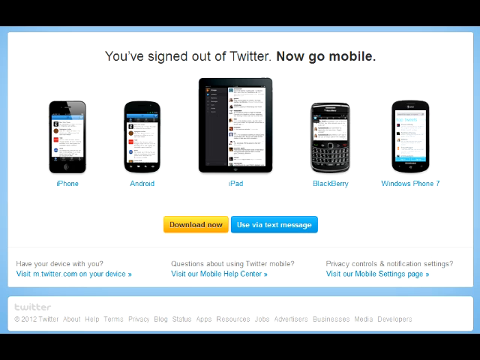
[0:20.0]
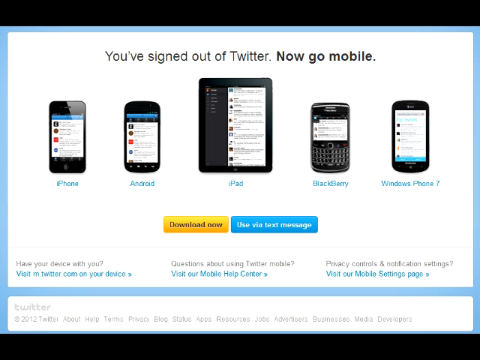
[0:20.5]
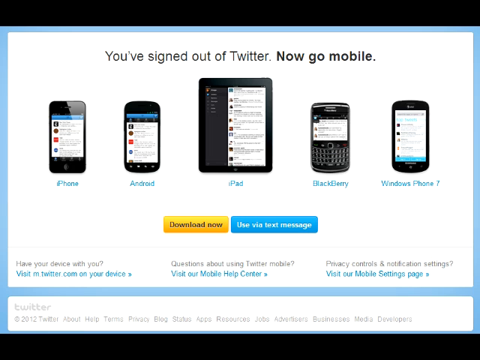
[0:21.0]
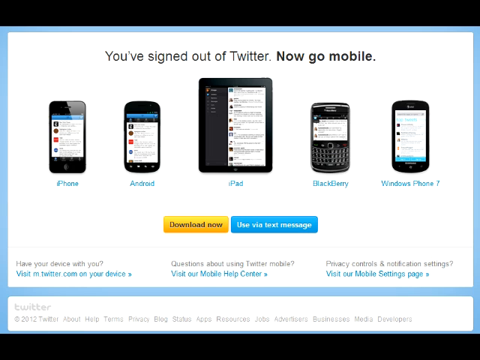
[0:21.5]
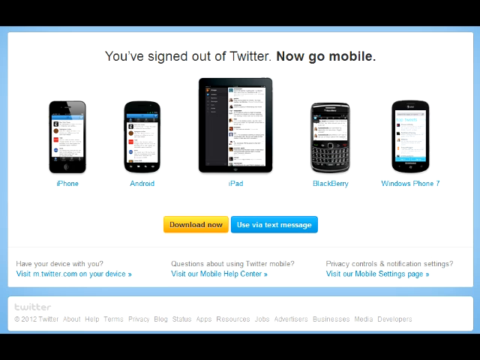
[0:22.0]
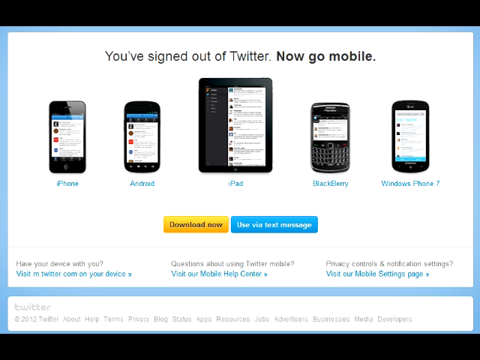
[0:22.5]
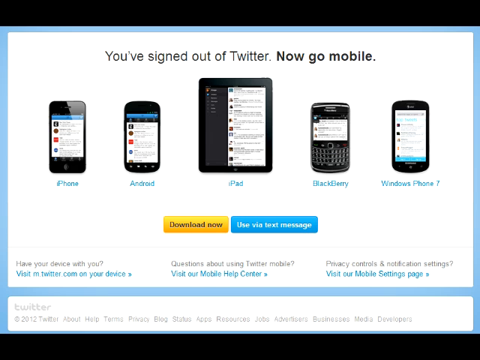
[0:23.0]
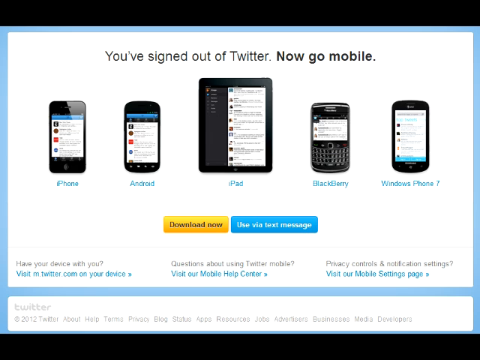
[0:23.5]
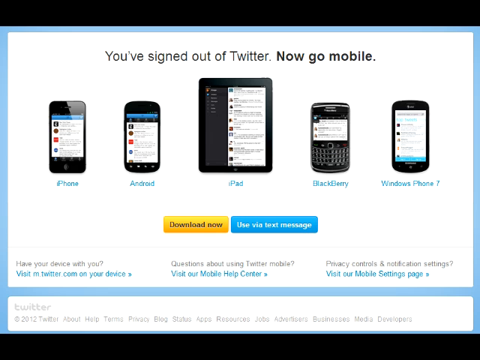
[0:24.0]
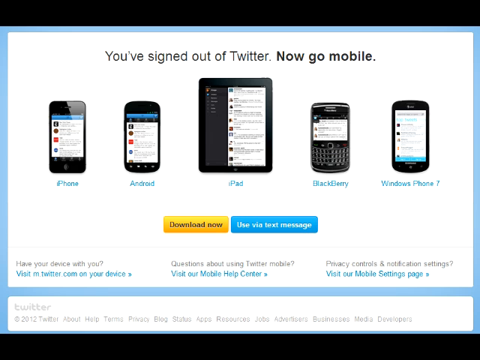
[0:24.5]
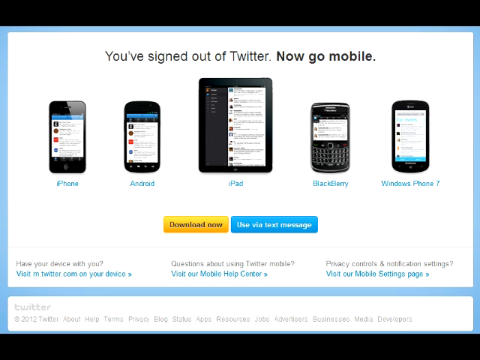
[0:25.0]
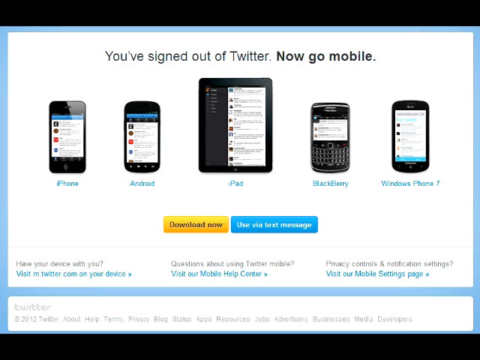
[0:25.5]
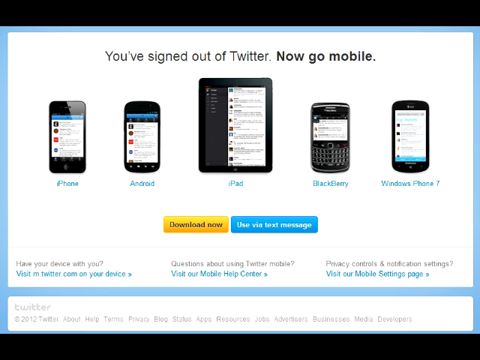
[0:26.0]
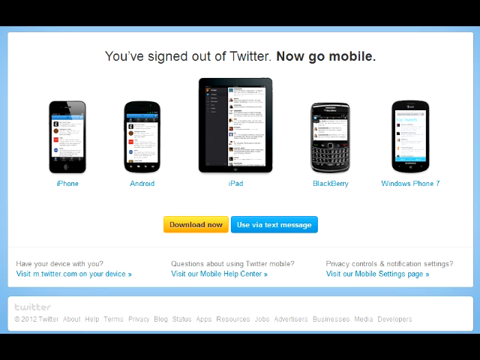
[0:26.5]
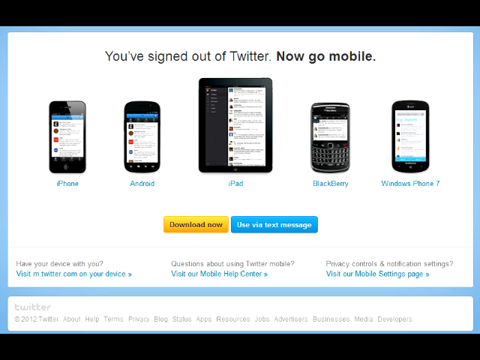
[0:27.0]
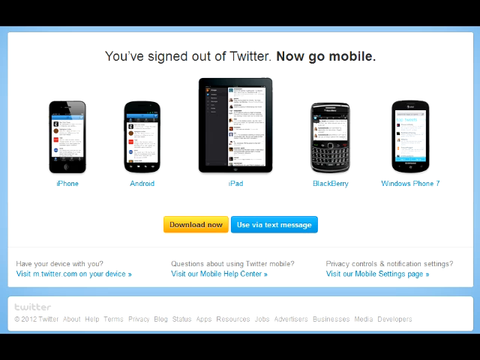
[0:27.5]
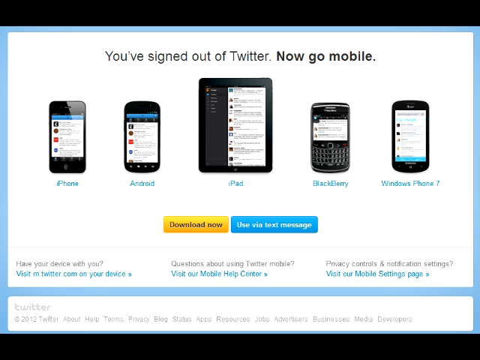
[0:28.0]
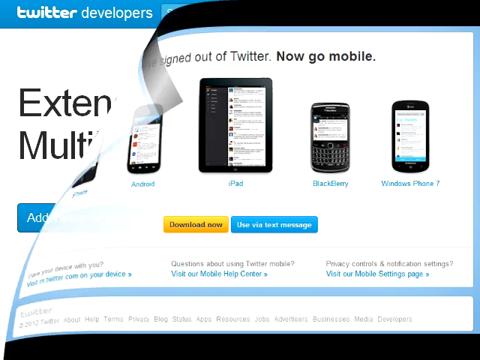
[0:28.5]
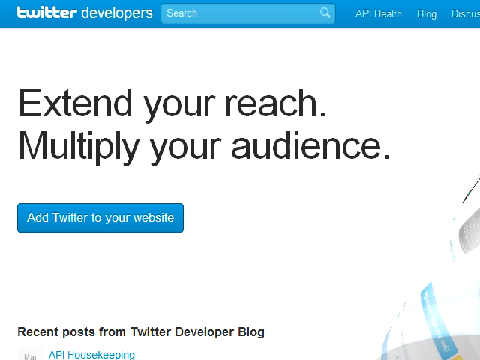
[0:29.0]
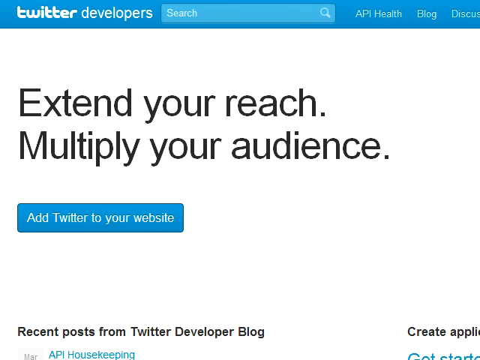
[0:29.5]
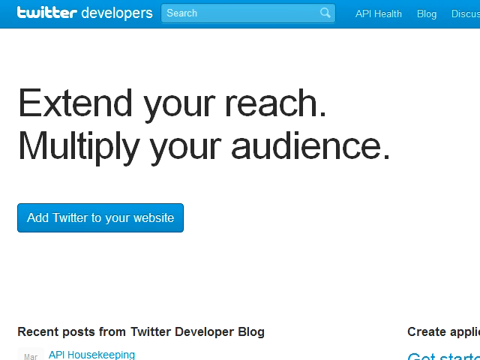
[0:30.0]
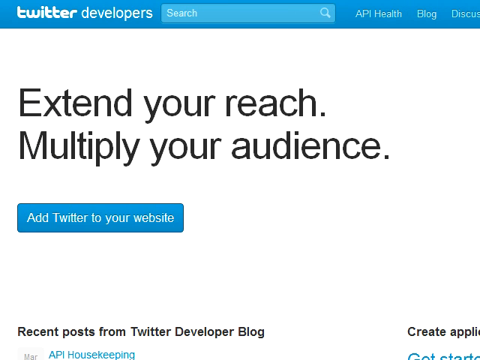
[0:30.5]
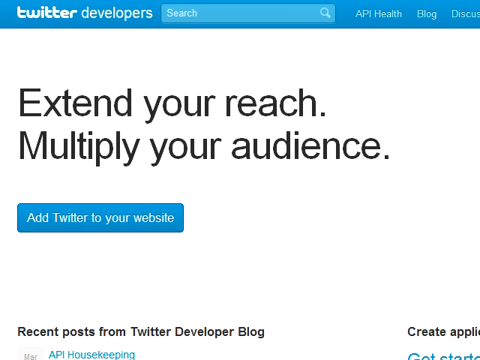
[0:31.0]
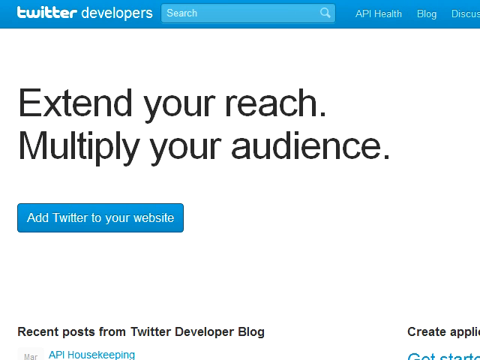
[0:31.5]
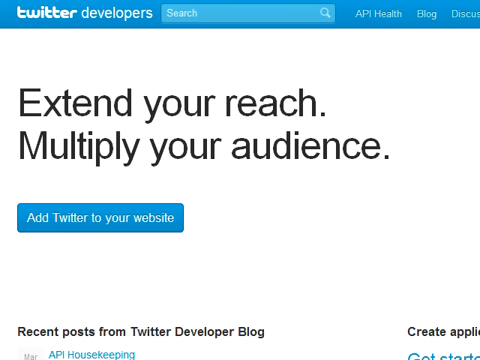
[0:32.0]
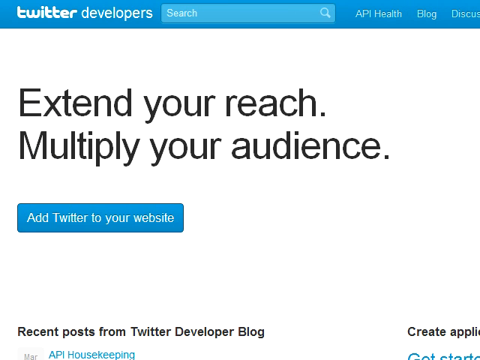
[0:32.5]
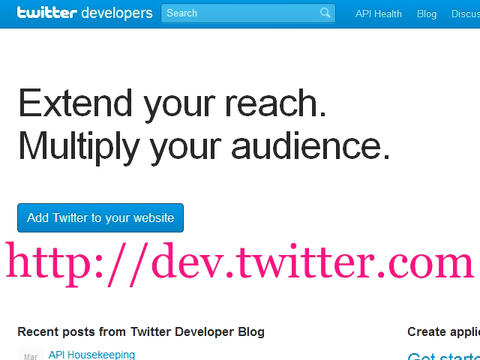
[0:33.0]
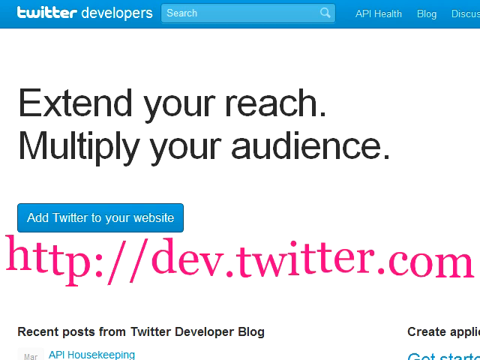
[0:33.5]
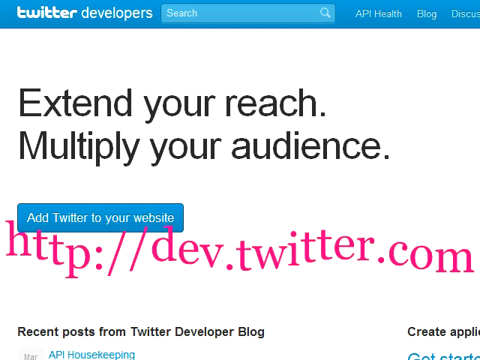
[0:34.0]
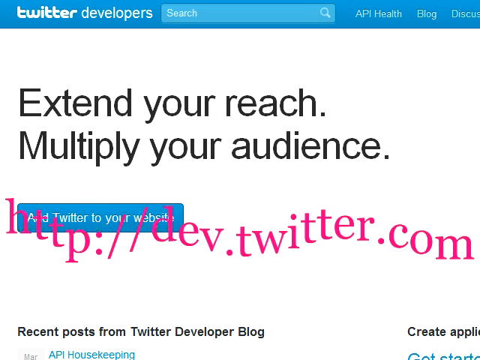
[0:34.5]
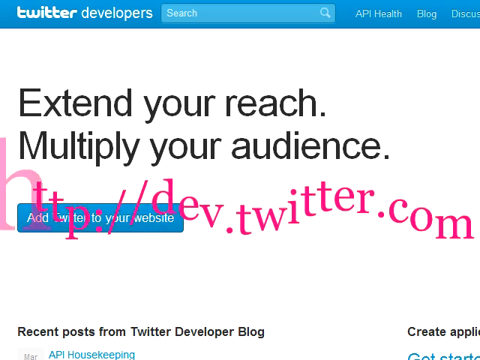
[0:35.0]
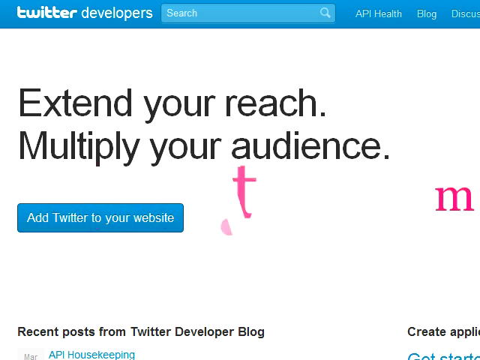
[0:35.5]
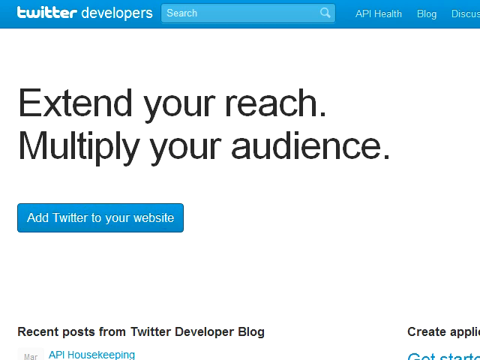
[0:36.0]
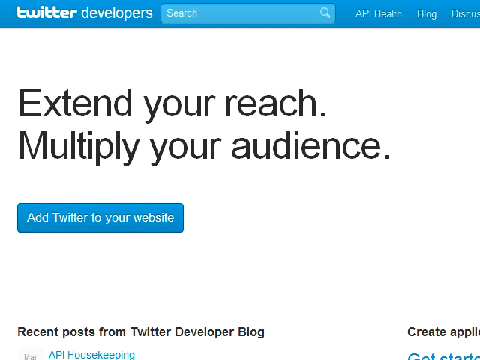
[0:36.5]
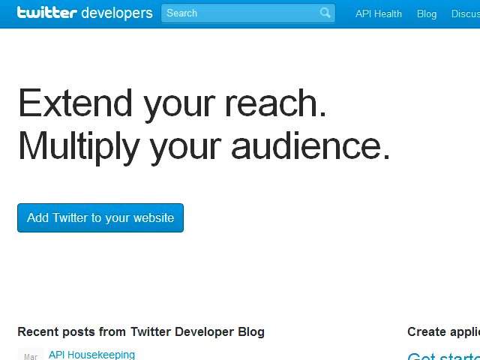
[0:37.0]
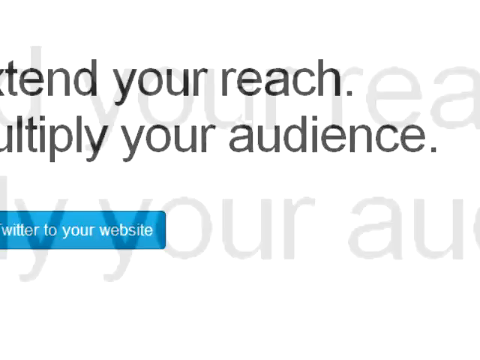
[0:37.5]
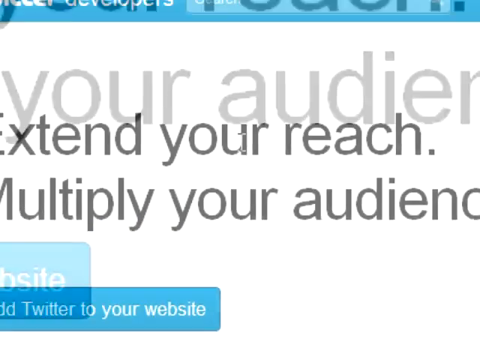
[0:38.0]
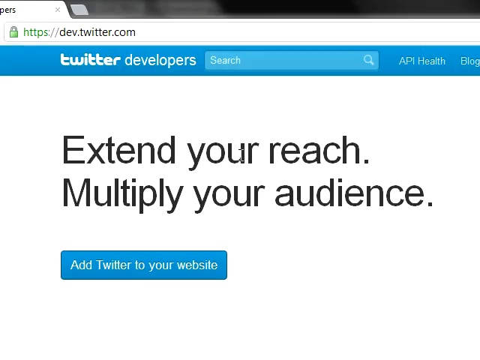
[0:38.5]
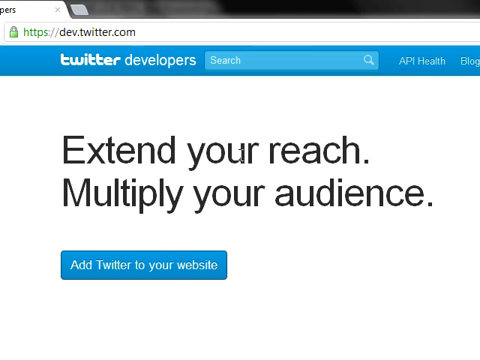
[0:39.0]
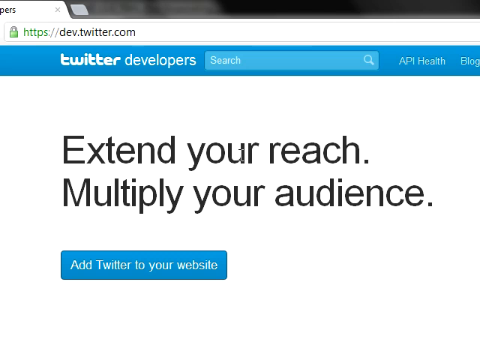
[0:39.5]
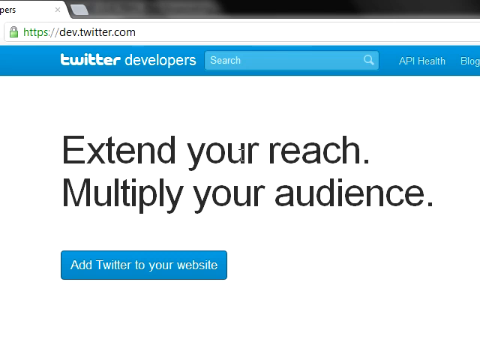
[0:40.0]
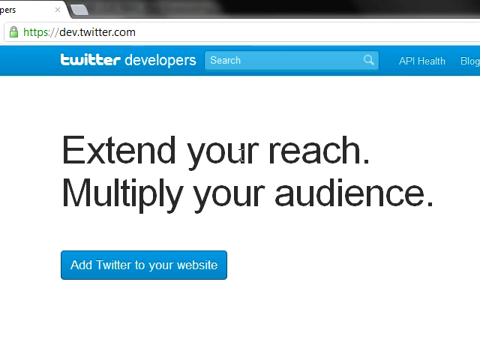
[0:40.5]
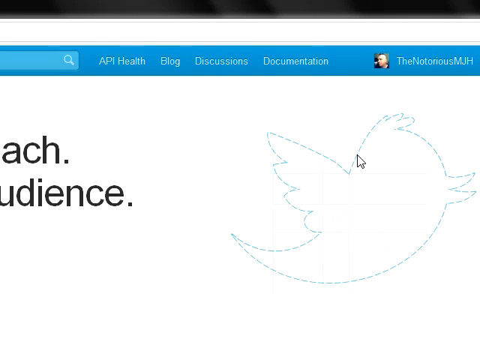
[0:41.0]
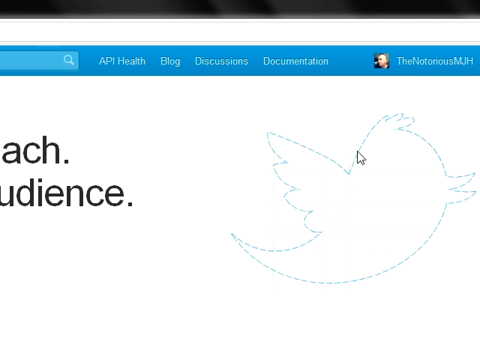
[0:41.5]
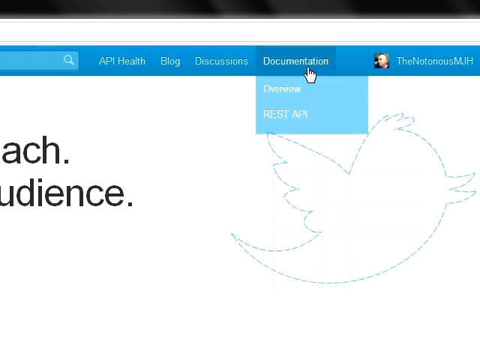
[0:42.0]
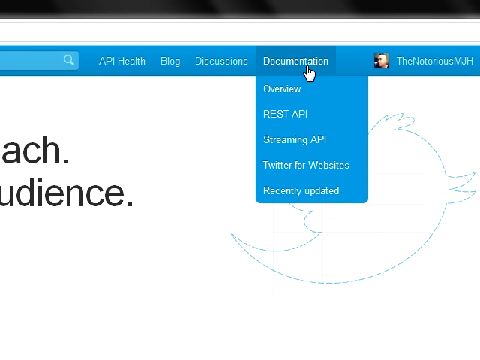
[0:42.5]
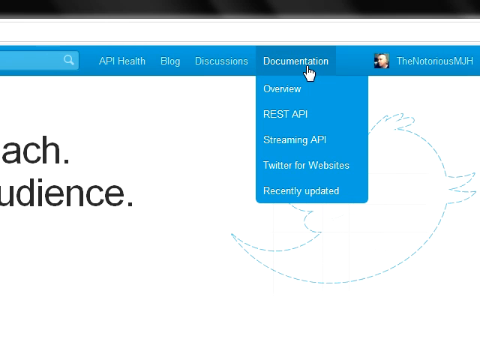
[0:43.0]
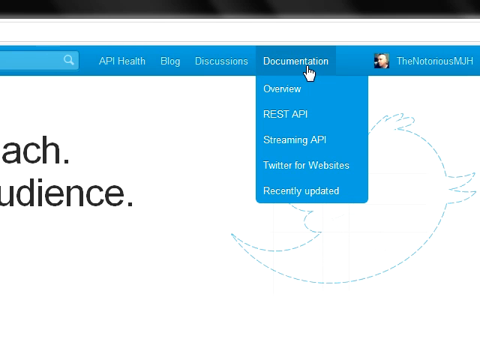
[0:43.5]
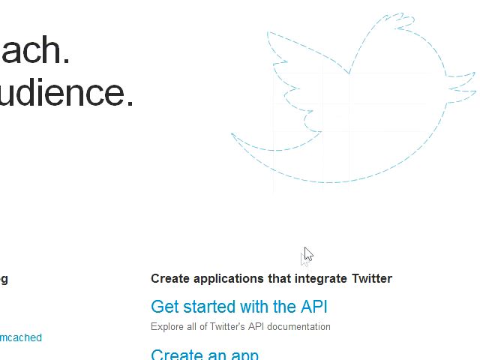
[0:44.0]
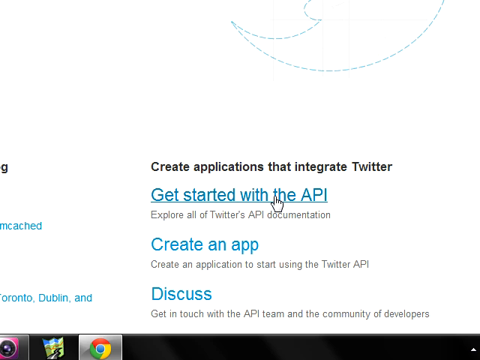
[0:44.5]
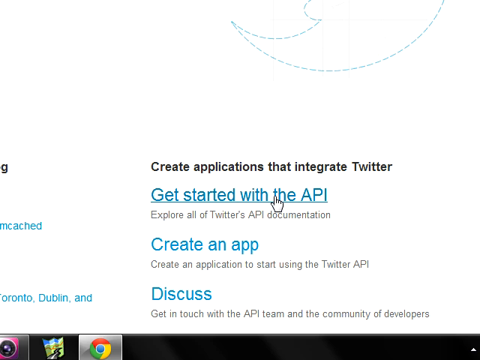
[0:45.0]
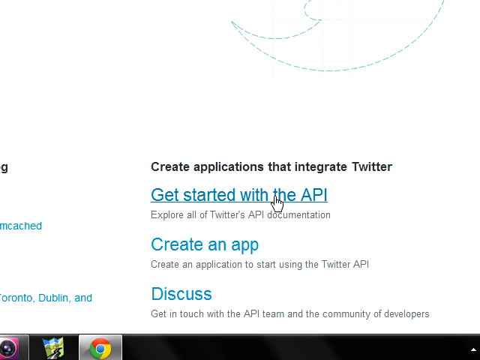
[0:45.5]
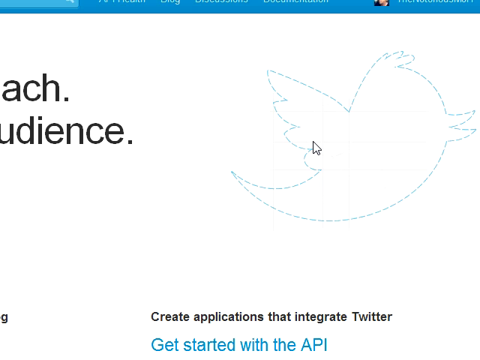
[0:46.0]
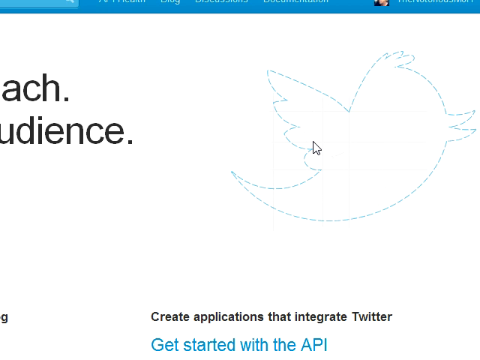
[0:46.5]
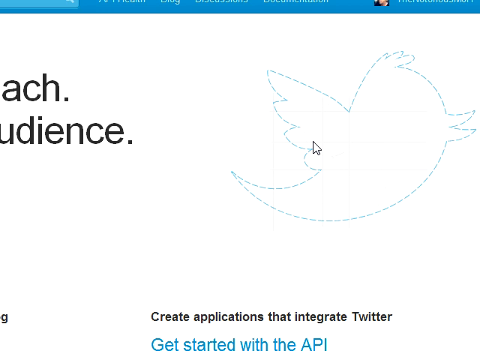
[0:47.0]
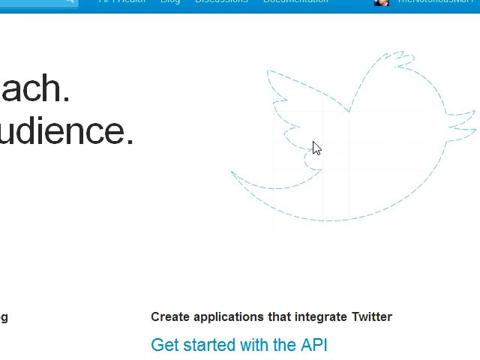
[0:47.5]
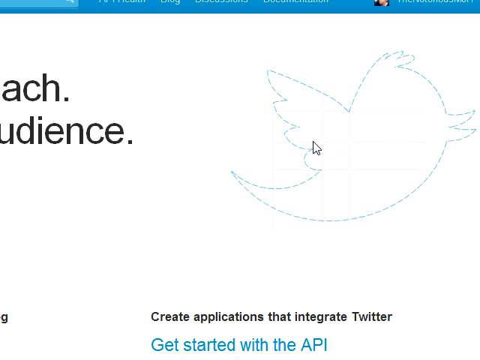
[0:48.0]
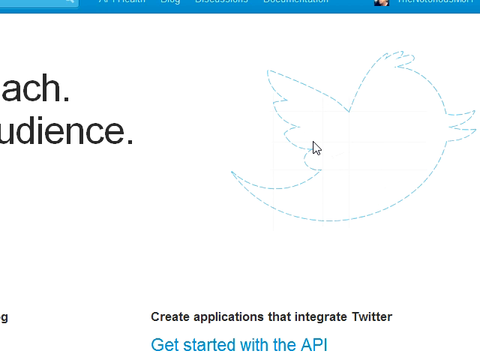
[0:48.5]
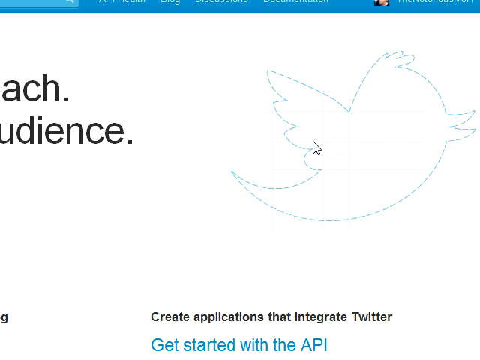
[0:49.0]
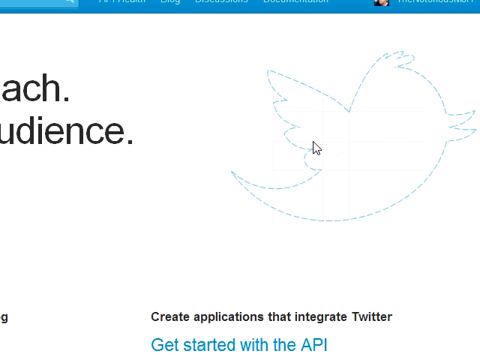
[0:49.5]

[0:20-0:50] The display reading "you signed out of Twitter, now go mobile" remains, with the iPhone, Android, iPad, Blackberry and Windows Phone 7 devices; underneath them are a yellow button that says "download now" and a blue button that says "use via text message." The screen then folds away as if a page is turning, revealing another page underneath that says "Twitter Developers, extend your research, multiply your audience," with a blue button on the left-hand side that says "add Twitter to your website." At the top of this display, beside "Twitter Developers," is a search bar, and beside that are "API Health," "Blog" and "Discuss," where it cuts off. Underneath the "add Twitter to your website" button, a website appears in pink font; it appears to wave slightly up and down, and then the letters disappear one at a time. Another web page then appears on top, again reading "Twitter developers, extend your research, multiply your audience" with an "add Twitter to your website" button. The screen scrolls over to the right side, and the mouse clicks on "documentation," which opens a drop-down menu. The person clicks on something that leads to another page, or maybe the bottom of a page, moves the cursor to the link "get started with the api" and clicks it. This leads to a page showing a blue outline of a bird, the Twitter logo, drawn as a dashed rather than solid line.